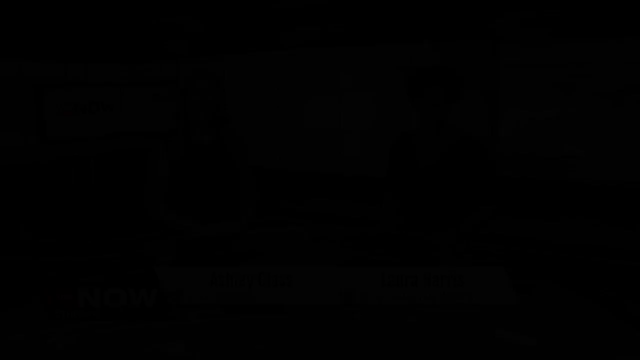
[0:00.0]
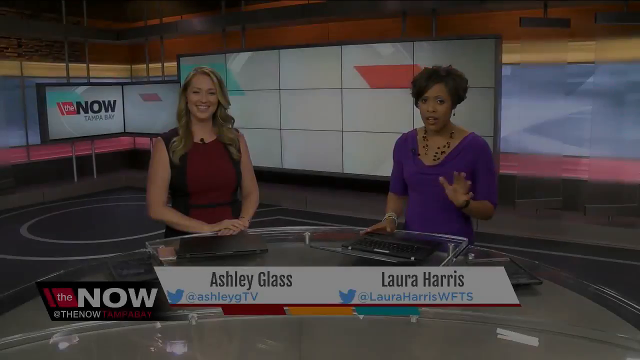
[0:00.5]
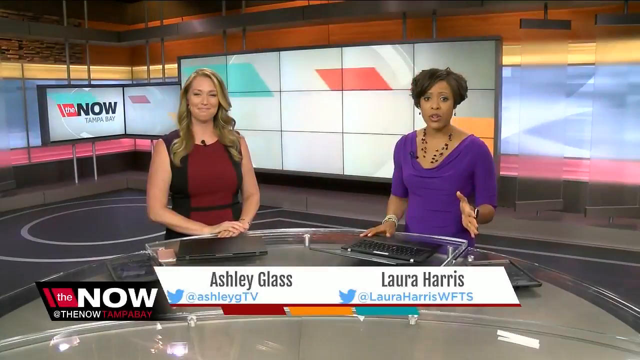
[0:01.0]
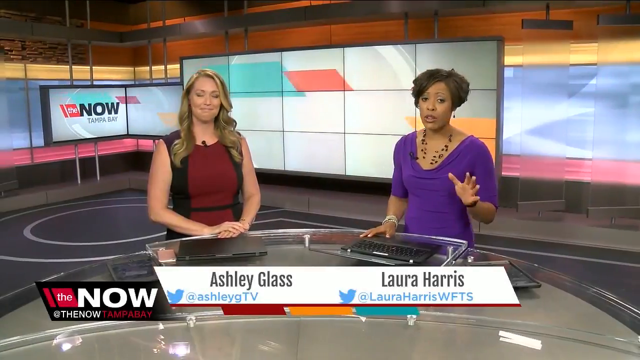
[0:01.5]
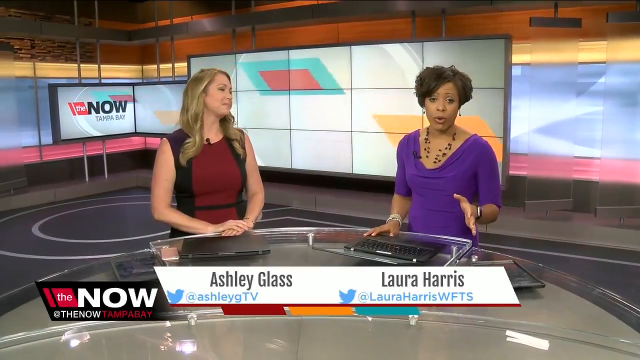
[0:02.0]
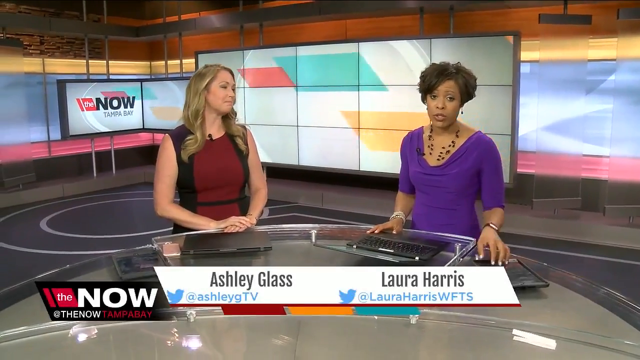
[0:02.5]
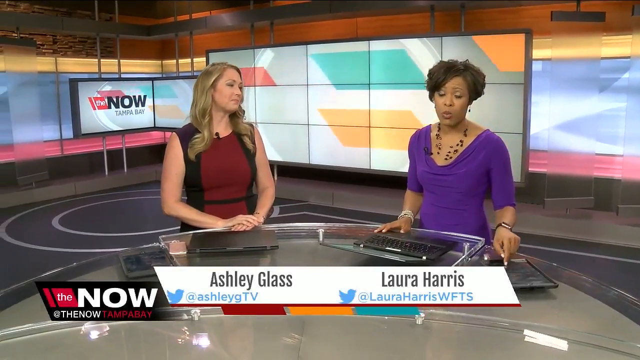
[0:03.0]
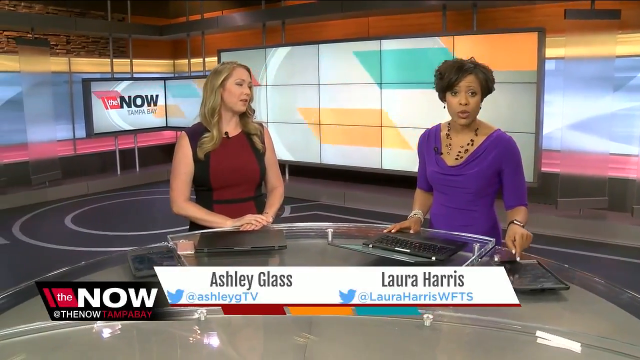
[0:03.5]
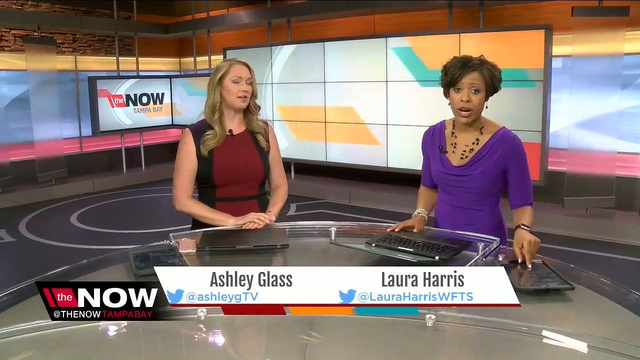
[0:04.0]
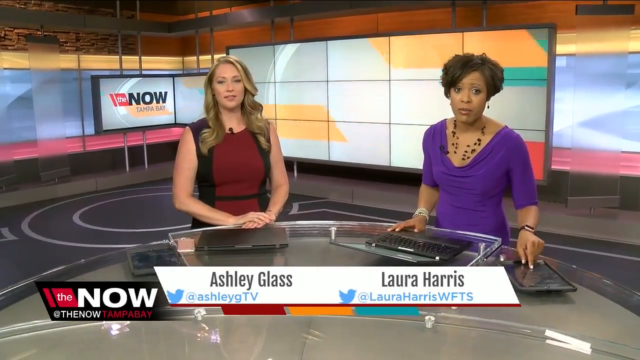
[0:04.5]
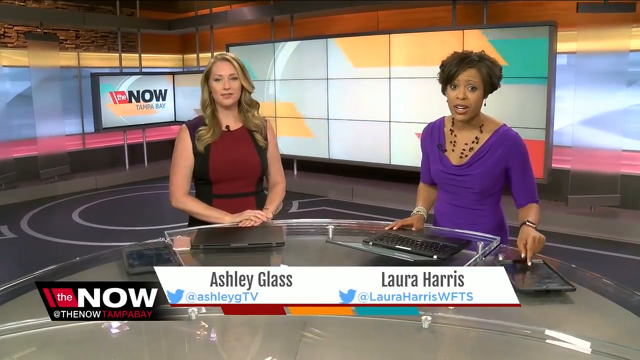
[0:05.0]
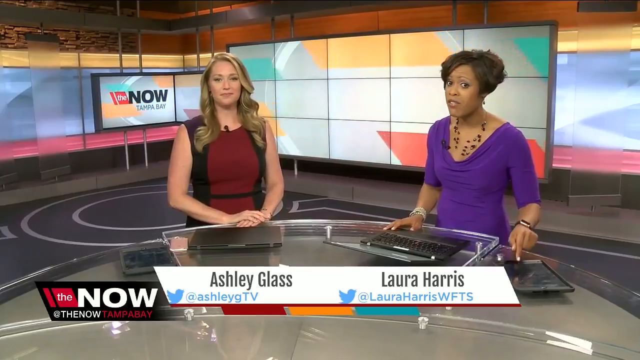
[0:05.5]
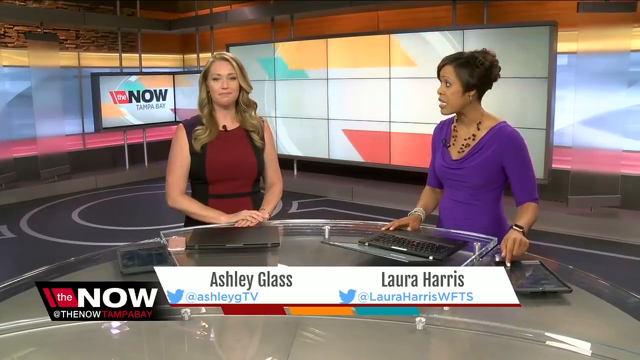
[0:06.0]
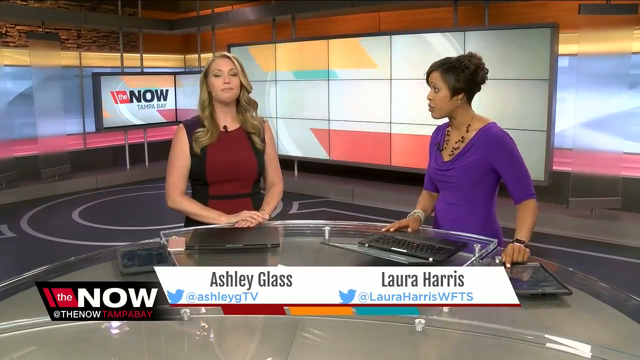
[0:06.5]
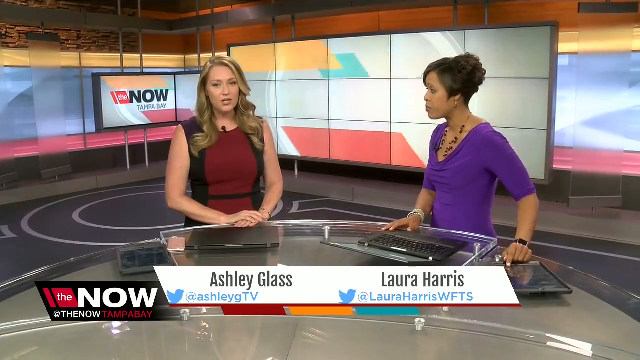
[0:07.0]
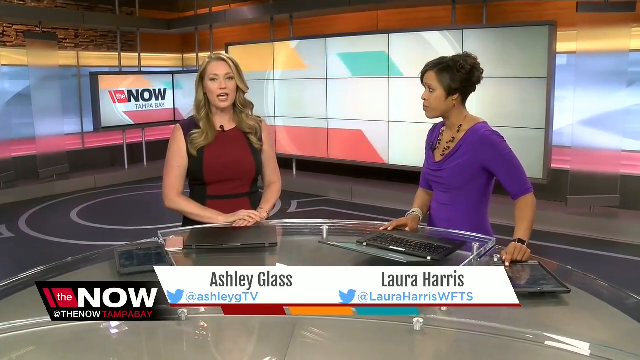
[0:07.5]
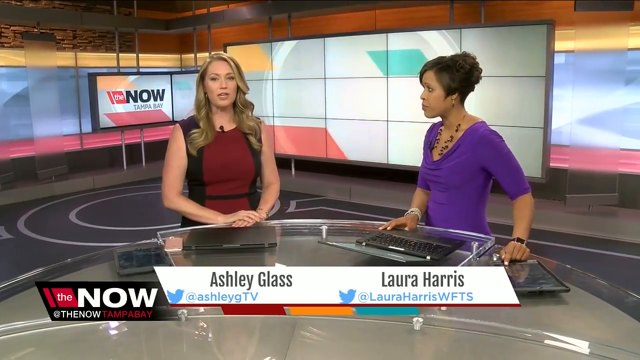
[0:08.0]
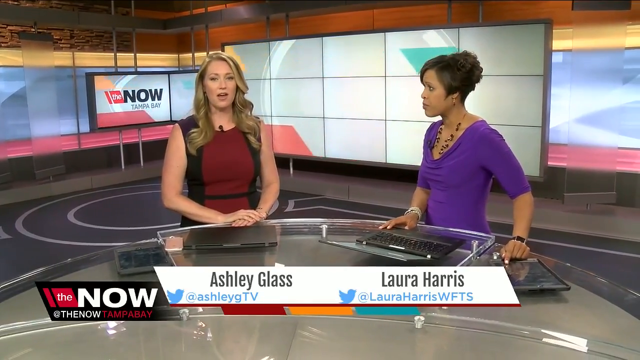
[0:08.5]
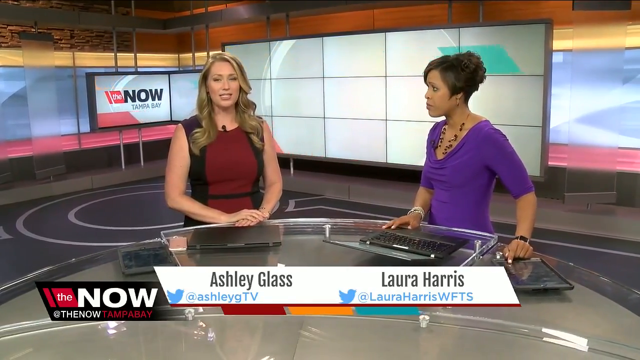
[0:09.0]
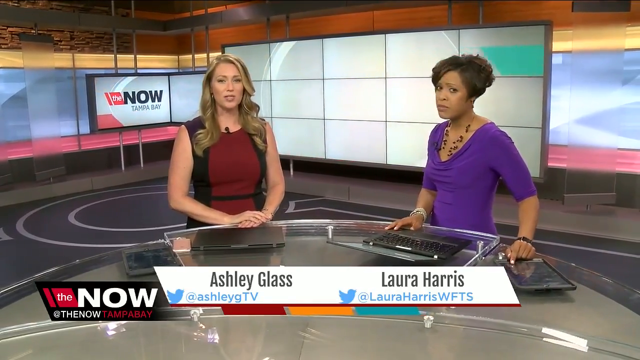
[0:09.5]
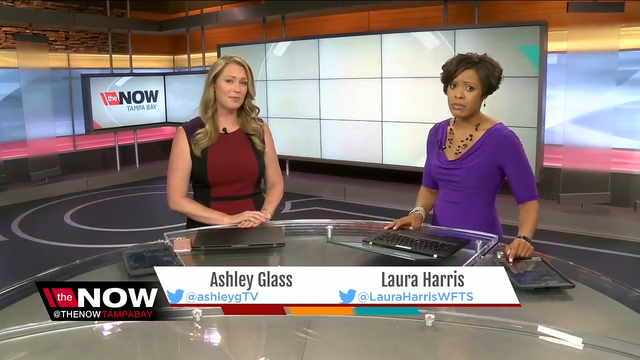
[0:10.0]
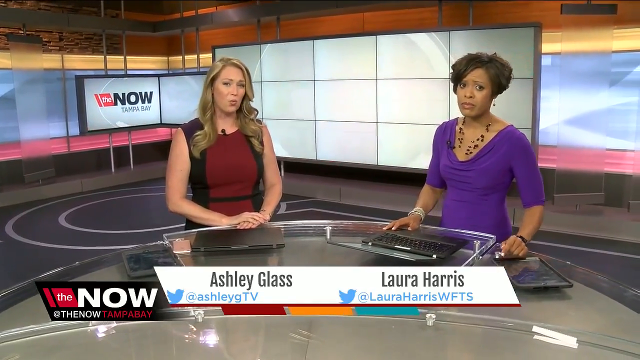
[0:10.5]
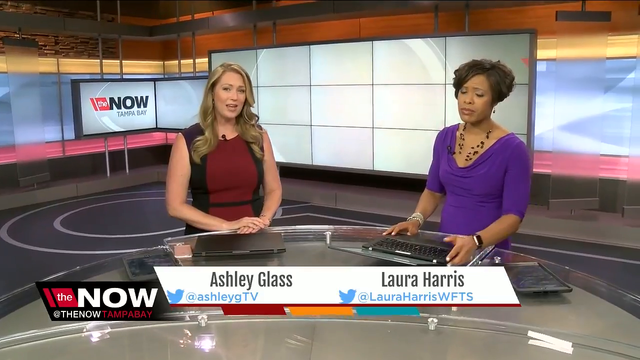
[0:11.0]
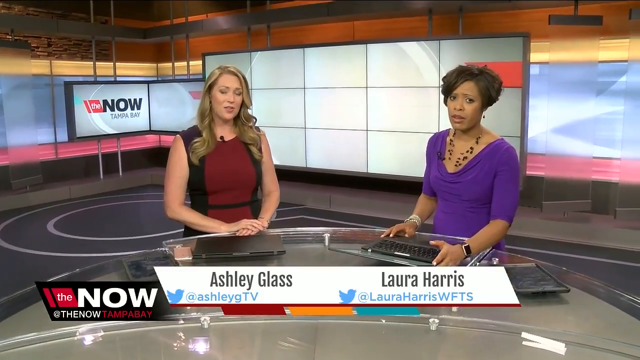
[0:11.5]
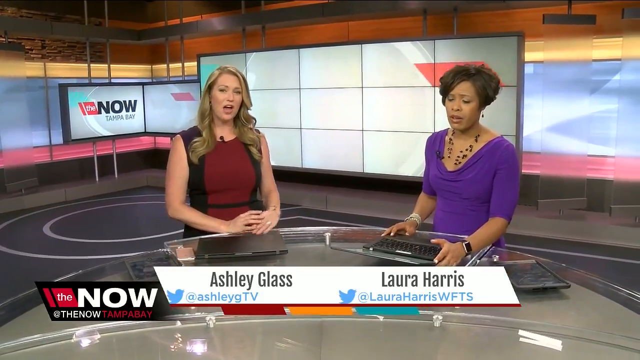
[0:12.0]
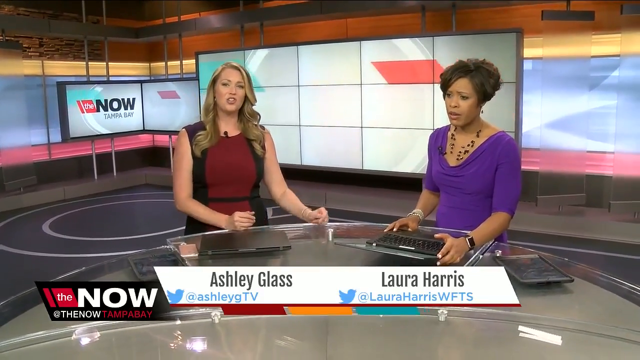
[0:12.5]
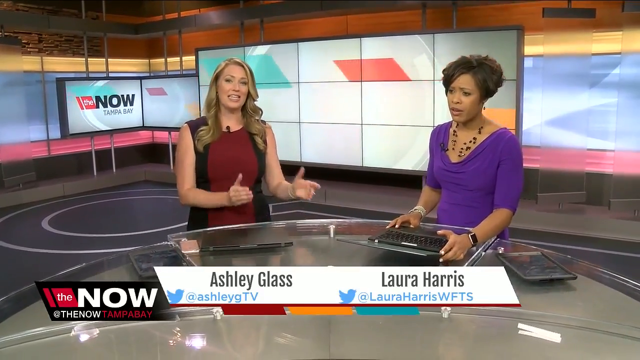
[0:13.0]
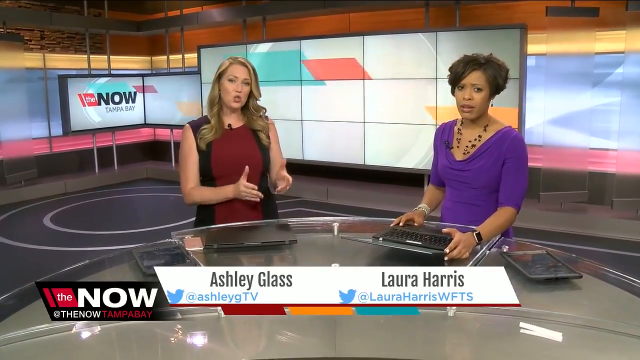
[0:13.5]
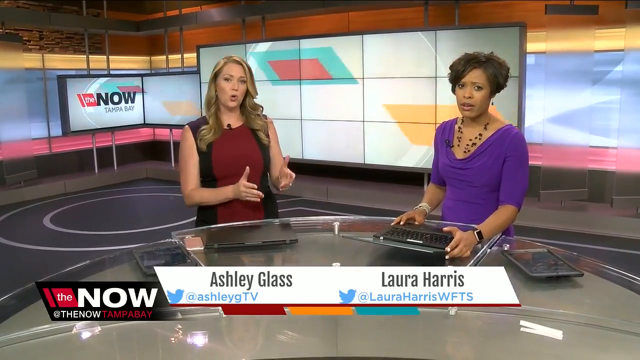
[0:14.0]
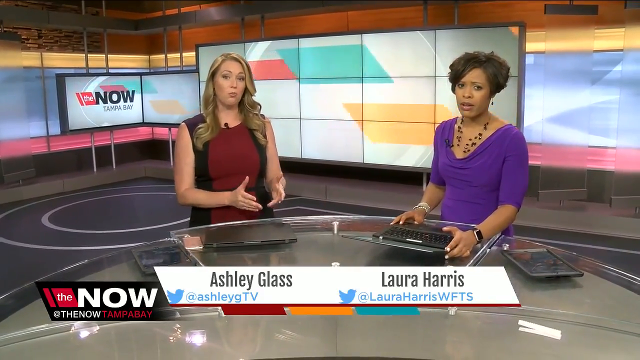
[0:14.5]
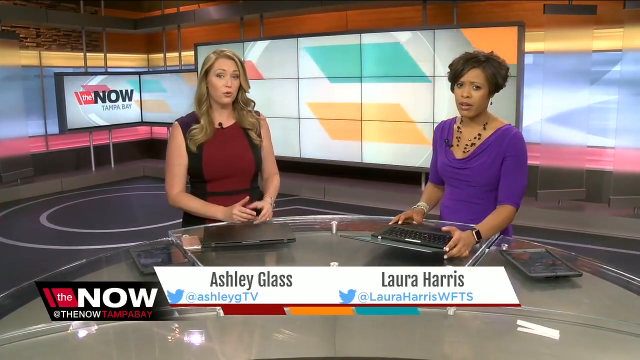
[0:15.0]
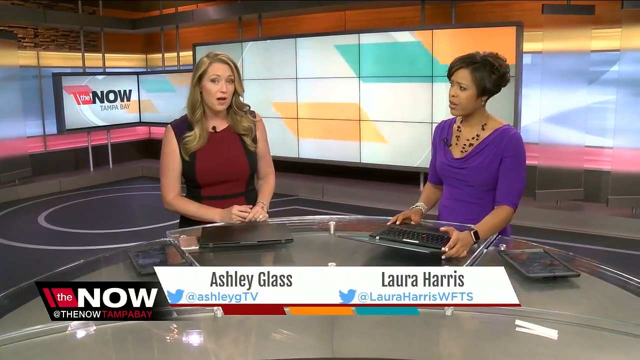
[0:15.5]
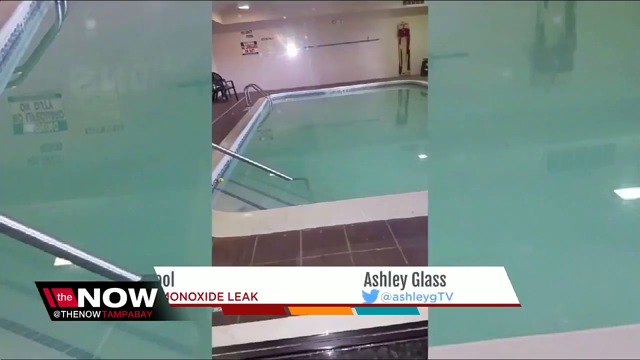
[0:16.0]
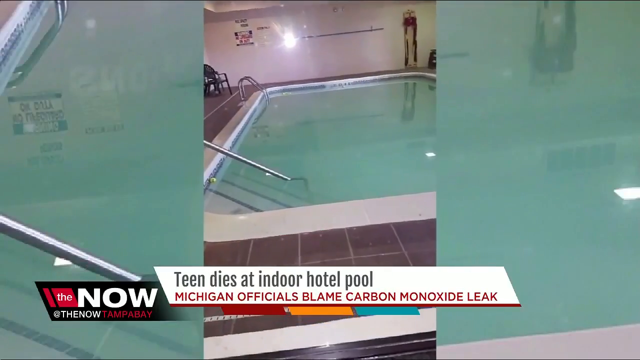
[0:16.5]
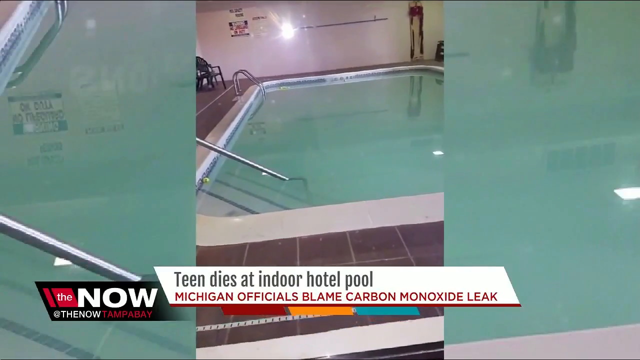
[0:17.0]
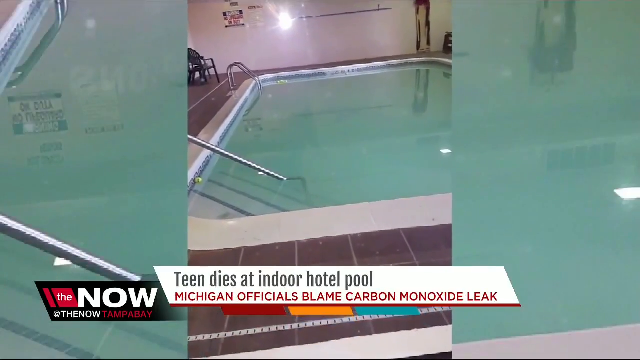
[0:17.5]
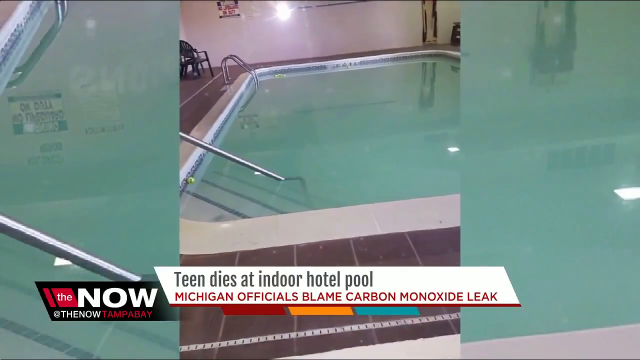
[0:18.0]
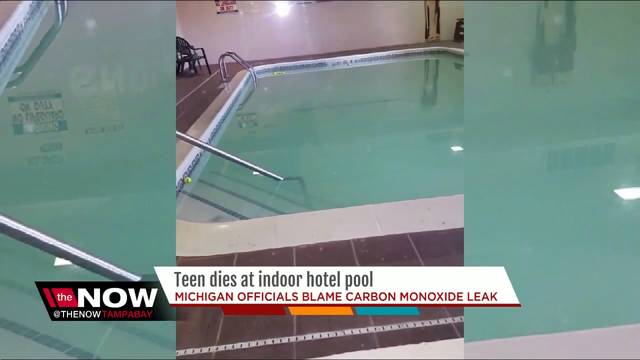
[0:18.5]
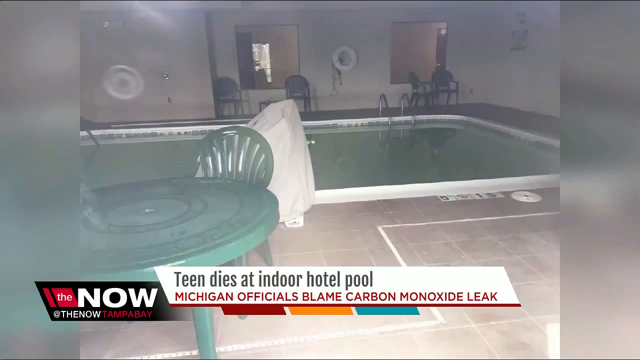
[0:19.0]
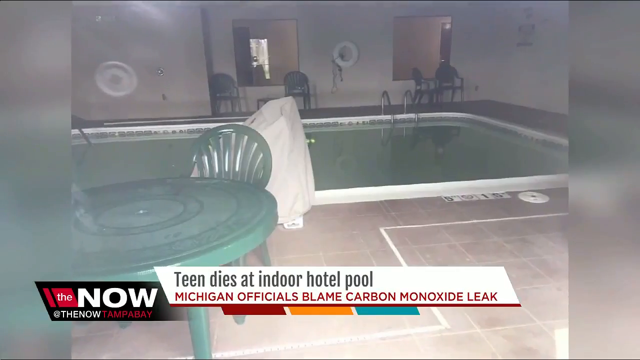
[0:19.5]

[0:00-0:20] Two women appear on screen. On the left is a white woman with blonde hair in a black and burgundy sleeveless top; to her right is a black woman with black hair, a purple top with sleeves to her elbows, and a reddish necklace around her neck. A white banner runs below them. Under the blonde woman, black lettering reads "Ashley Glass", with the blue Twitter X logo on the left and "at AshleyGTV". On the right, black letters at the top read "Laura Harris", again with the Twitter X logo, followed by "at Laura Harris" and "WFTS" in blue underneath. Behind them is a white digital screen with a pale blue square and an orange square to the right. The floor beneath them is gray with white lines. In the bottom left of the screen is a black banner with a red square holding the white letters "the"; beside it, on a black background, is "now", and underneath, in white, "at the now", followed by "Tampa Bay" in red. The same lettering appears on the screen in the back on a white background, with "Tampa Bay" in light blue and "now" in black. The women are sitting at a glass table with two black laptops in front of them. The black woman has hers open, while the other woman has hers closed, along with her silver iPhone facing downwards. A light brownish wall is visible in the top section, with gray square paneling over the top and gray bars hanging down. The image then changes to what looks like a teal pool with a white outline, gray tiled flooring, and silver bars for entering the pool at both the front and the back. There is a white wall at the back with a gray chair in the left corner. A white banner at the bottom reads in gray lettering "teen dies at indoor hotel pool", with reddish lettering underneath reading "Michigan officials blame carbon monoxide leak", and a red, orange and teal box below. The next image shows a green table with green chairs on the left side, a white towel over possibly a white chair, and more green chairs in the background against a white wall. The pool looks green.